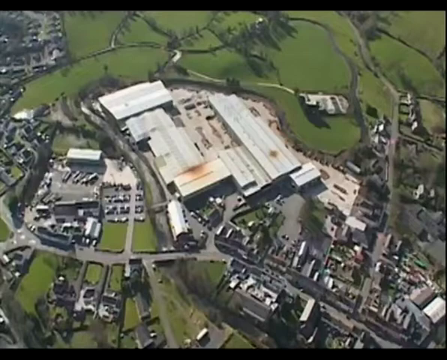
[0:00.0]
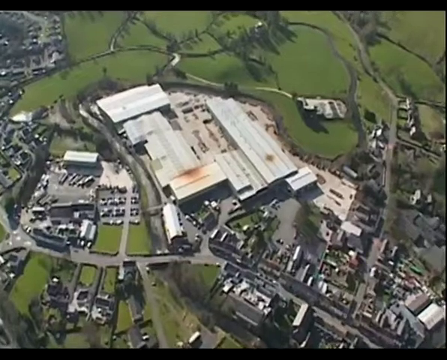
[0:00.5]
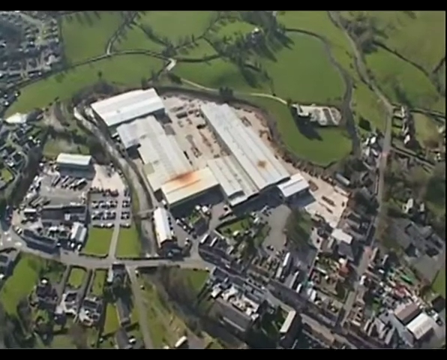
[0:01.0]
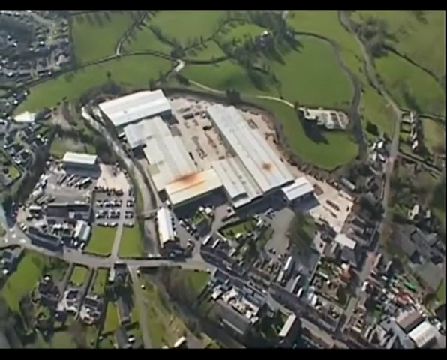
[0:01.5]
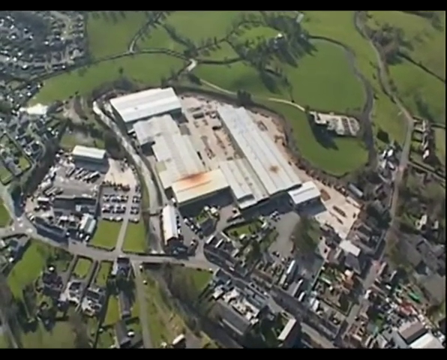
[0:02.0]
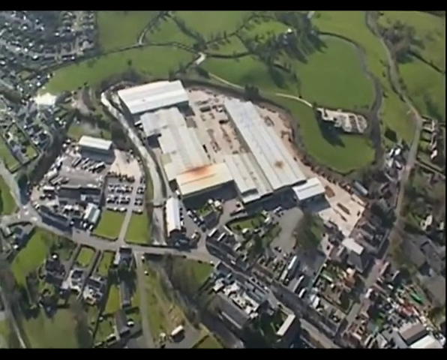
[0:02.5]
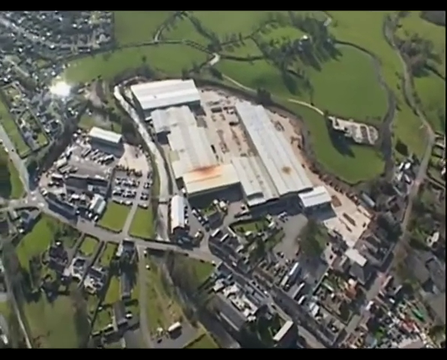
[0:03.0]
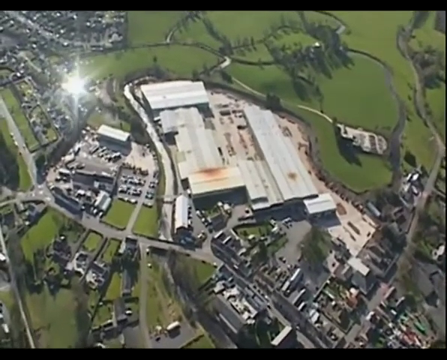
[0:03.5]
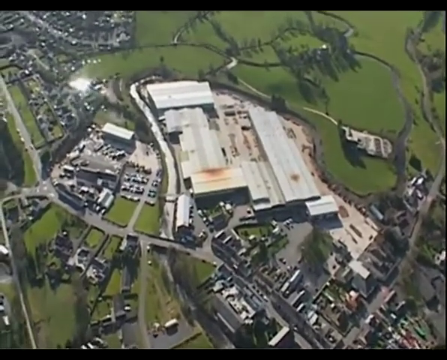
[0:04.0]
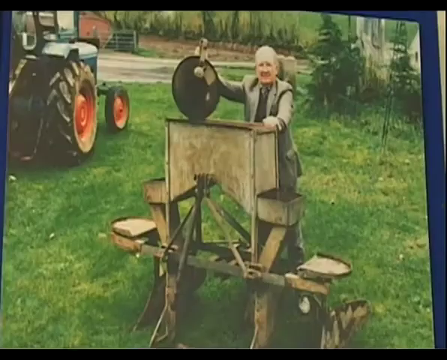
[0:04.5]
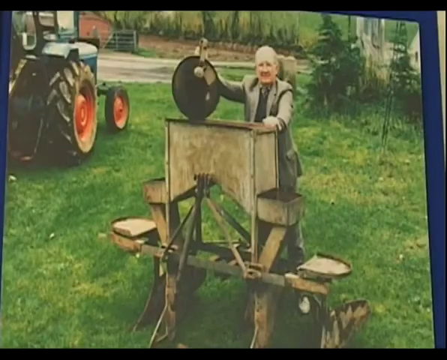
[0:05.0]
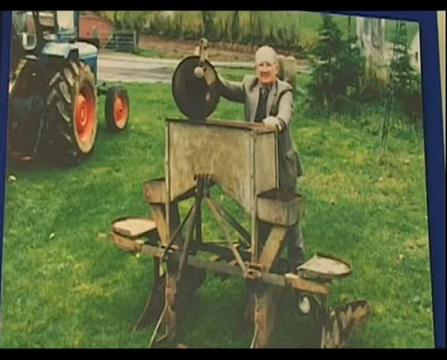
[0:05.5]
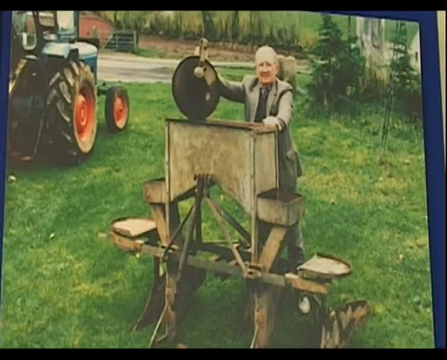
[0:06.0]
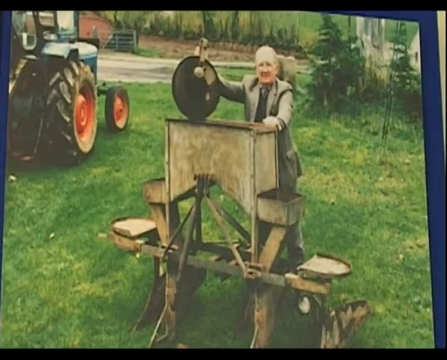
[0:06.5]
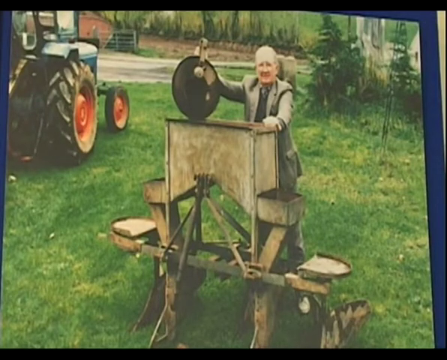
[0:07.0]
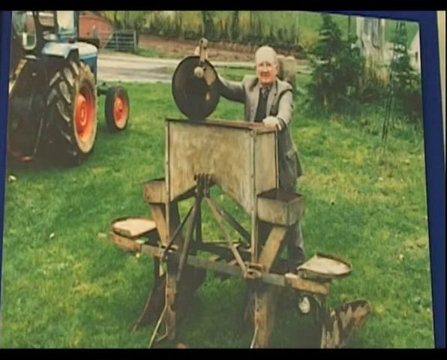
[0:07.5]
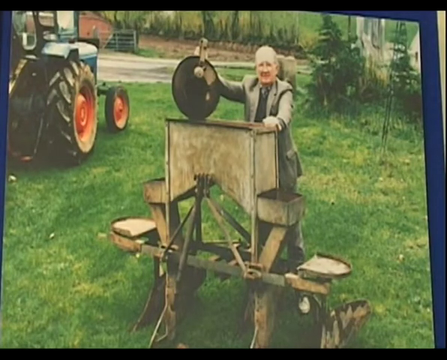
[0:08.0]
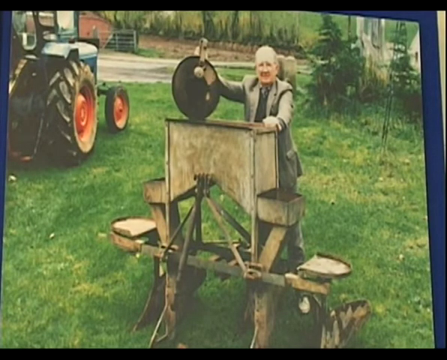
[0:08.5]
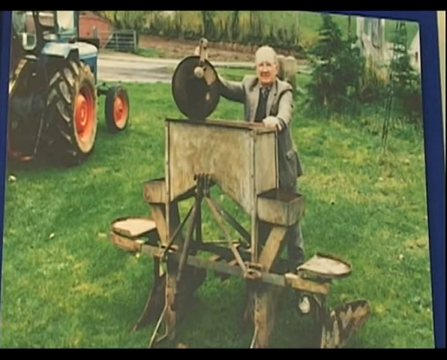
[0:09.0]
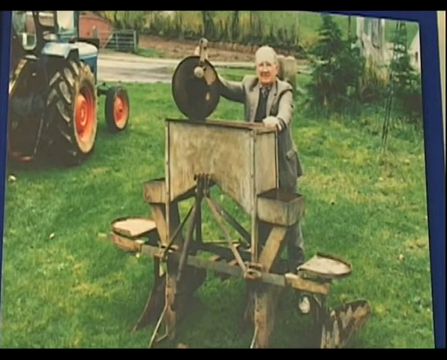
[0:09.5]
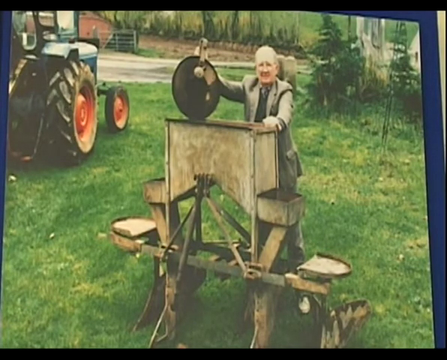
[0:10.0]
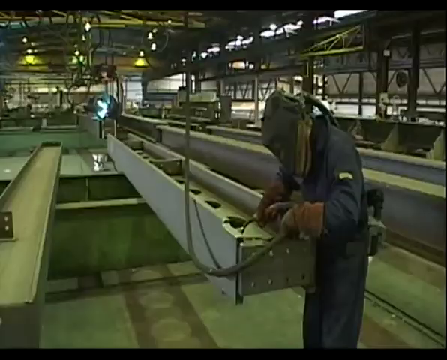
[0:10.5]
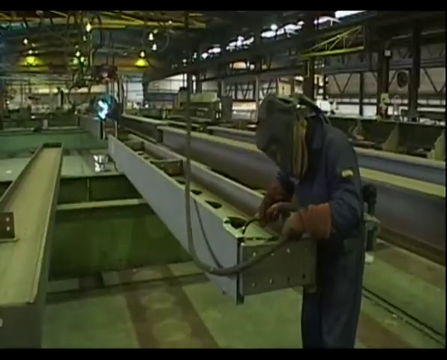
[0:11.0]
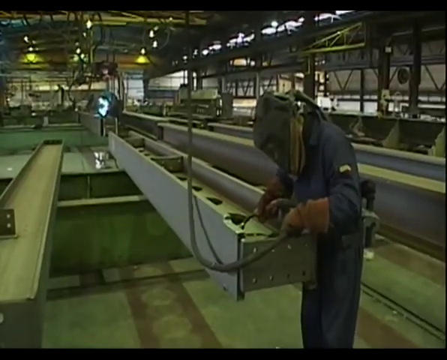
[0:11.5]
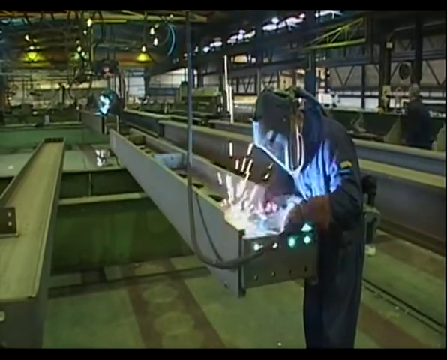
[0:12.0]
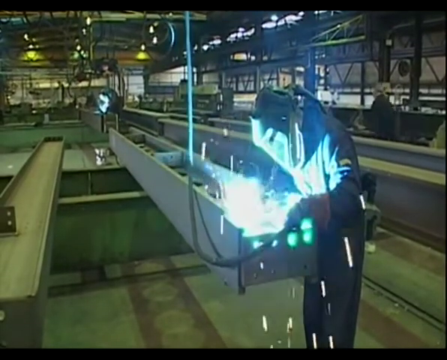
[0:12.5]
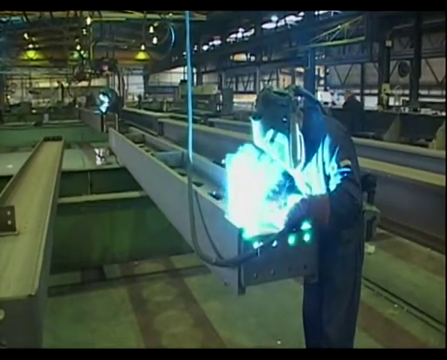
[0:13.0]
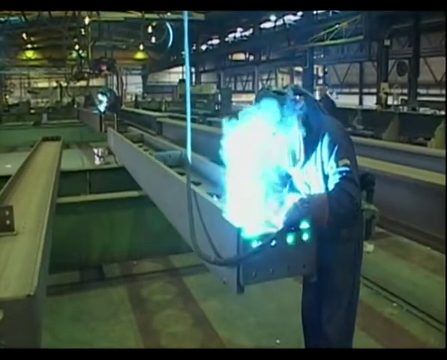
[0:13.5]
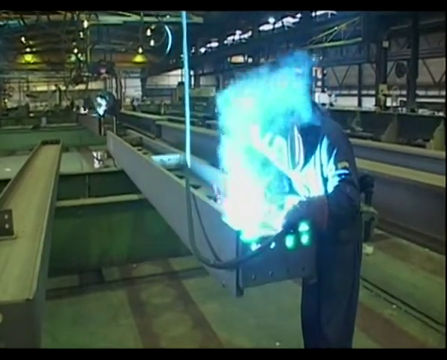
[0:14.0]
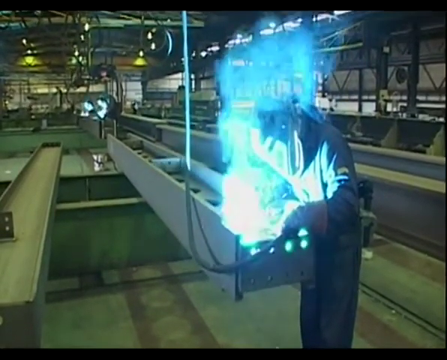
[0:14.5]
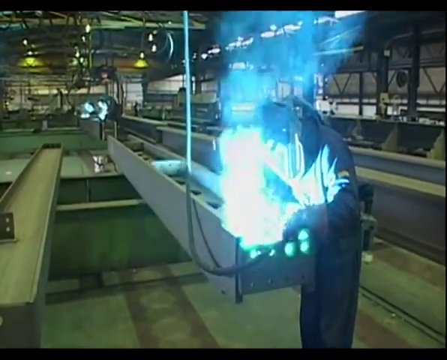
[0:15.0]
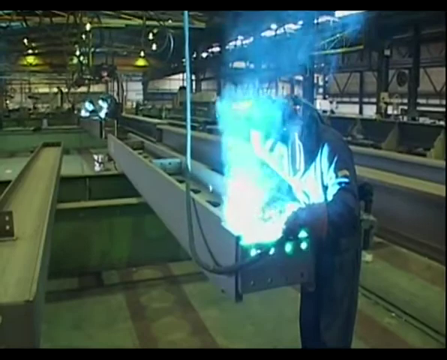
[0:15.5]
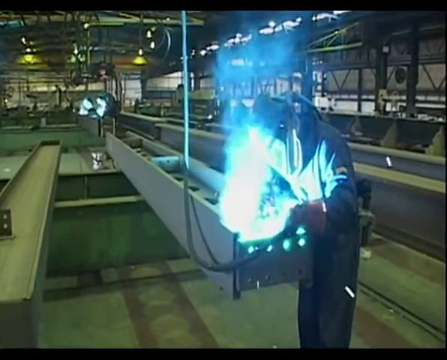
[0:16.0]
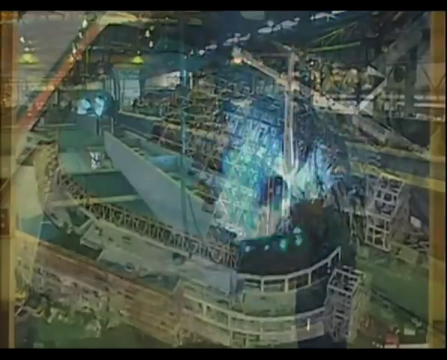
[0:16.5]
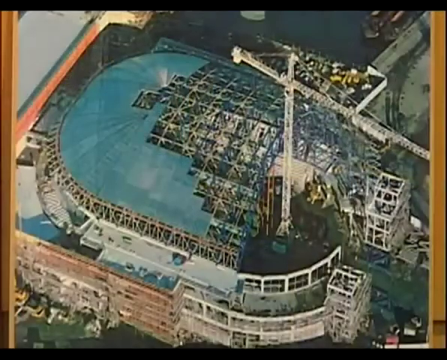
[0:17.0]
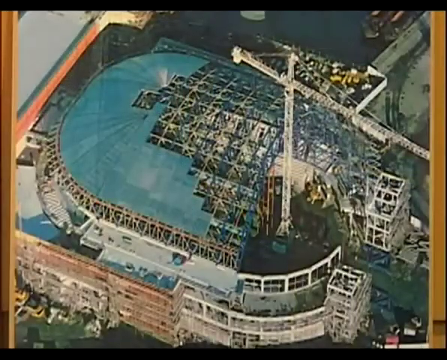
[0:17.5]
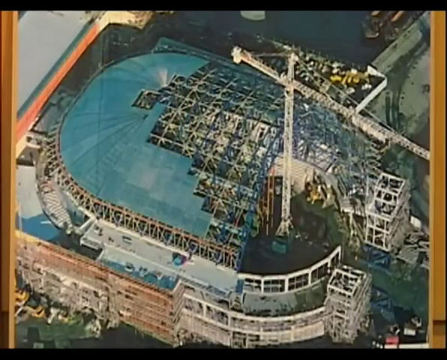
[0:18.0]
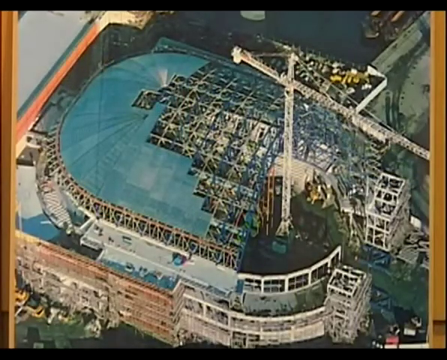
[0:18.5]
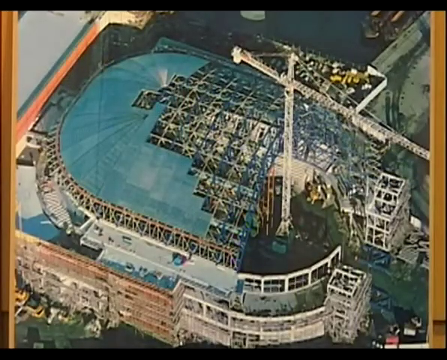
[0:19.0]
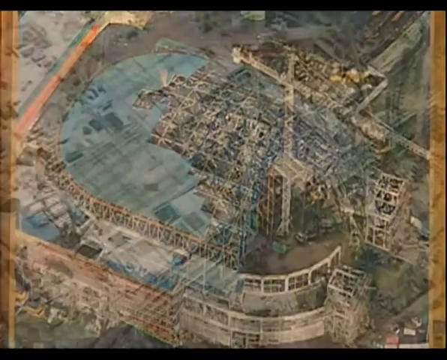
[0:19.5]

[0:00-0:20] The video opens with an aerial view looking downward on top of a large white building with a white roof made up of many roofs. It is surrounded by smaller buildings with cars parked around it, and there is a green field at the top of the frame. The aerial view moves slowly toward the right, shakily filming the building. The view then transitions to what looks like a picture of an old man facing the camera. He wears a gray suit and stands on a grassy area, with a tractor at the top left in the background. He rests his left hand on what looks like some sort of old contraption: it looks like a tall desk that reaches up to his chest, with two protrusions at the middle and bottom, a hole in the middle, and a big wheel at the top. His right hand is on the wheel and his left hand is on the desk, and he is looking at the camera. Next comes a video clip that looks like it is in a factory, with beams across the roof. In the middle of the foreground is what looks like a worker in a blue suit, with a black welder's mask over his head and thick, heavy orange gloves. His body faces the left and he is hunched over what looks like a very large metal beam, holding a welder in his right hand. Sparks start flying and a very bright light comes out of the welder as he welds the beam. The video then transitions to another picture, an aerial view looking downward on what looks like a stadium being built. It has a blue roof and looks like an oval shape, and many metal beams are visible: on the left side the roof is finished, the middle shows a lot of beams, and a very tall crane comes out from the right side of the stadium. The video then transitions to another picture, which is cut off before it can be seen.